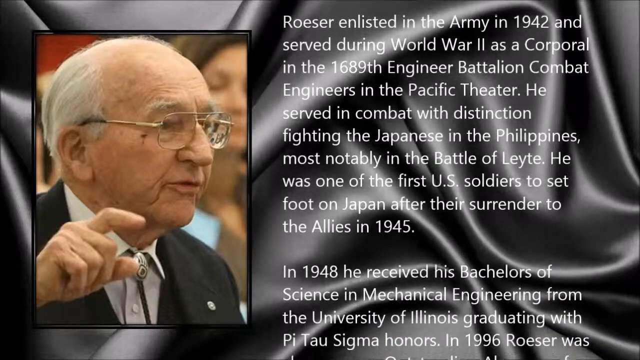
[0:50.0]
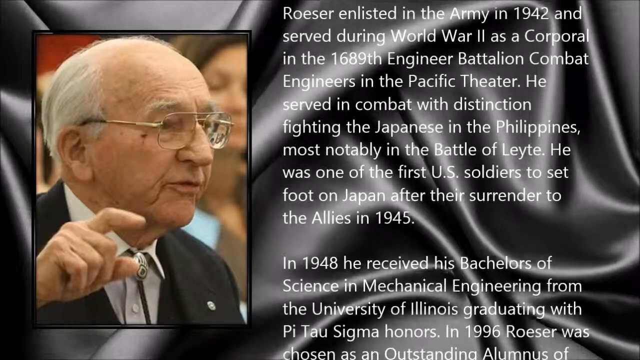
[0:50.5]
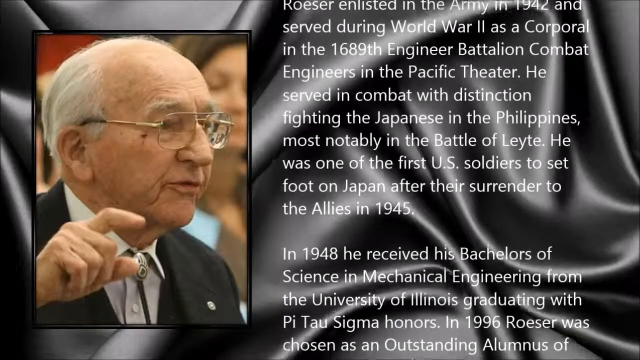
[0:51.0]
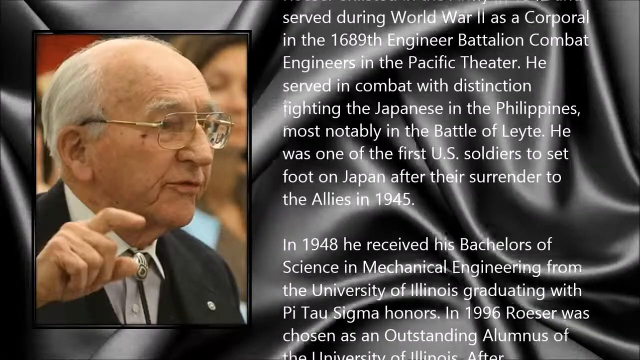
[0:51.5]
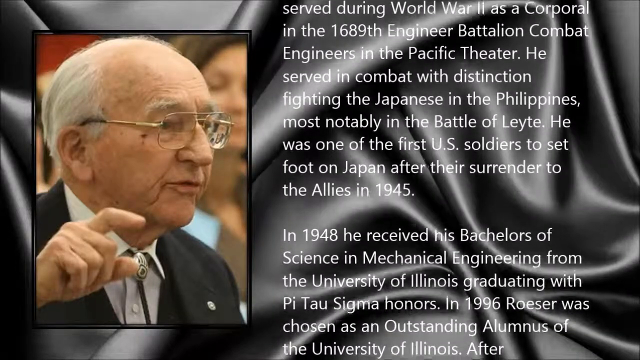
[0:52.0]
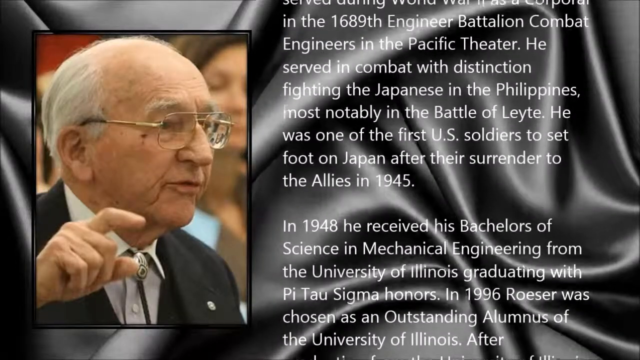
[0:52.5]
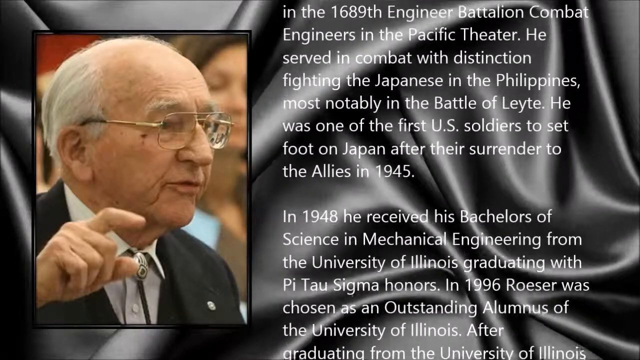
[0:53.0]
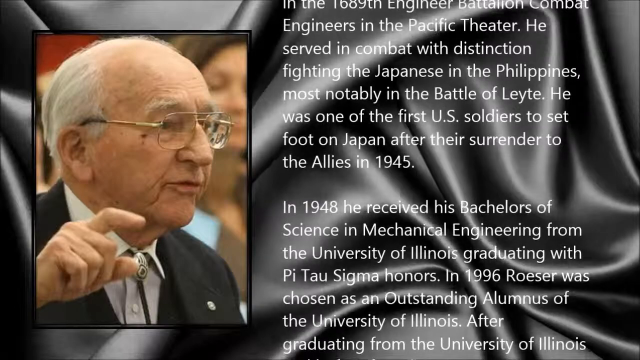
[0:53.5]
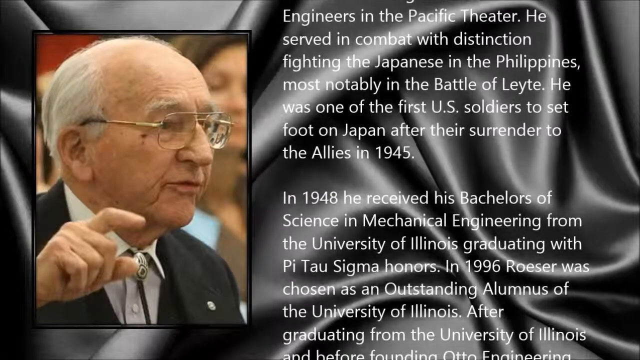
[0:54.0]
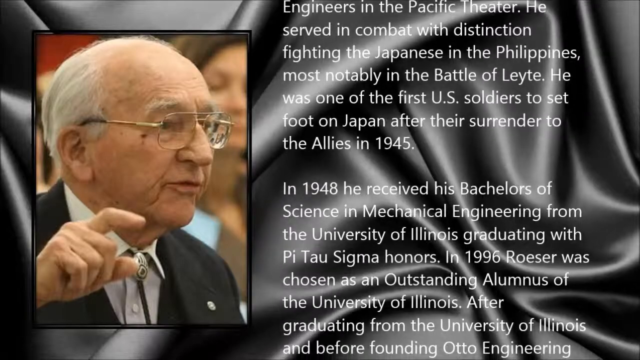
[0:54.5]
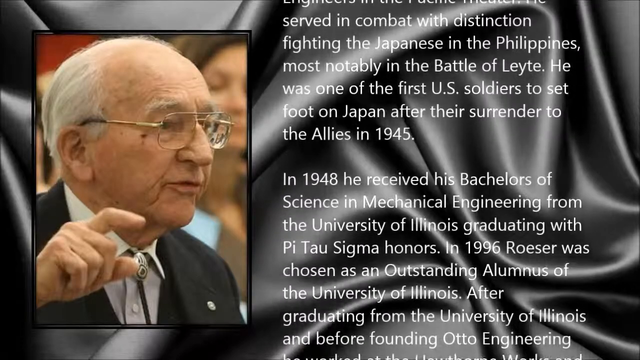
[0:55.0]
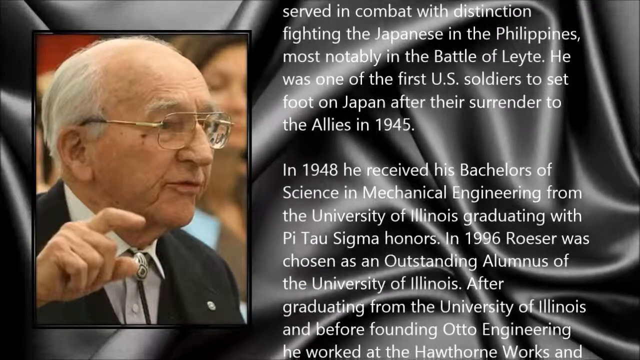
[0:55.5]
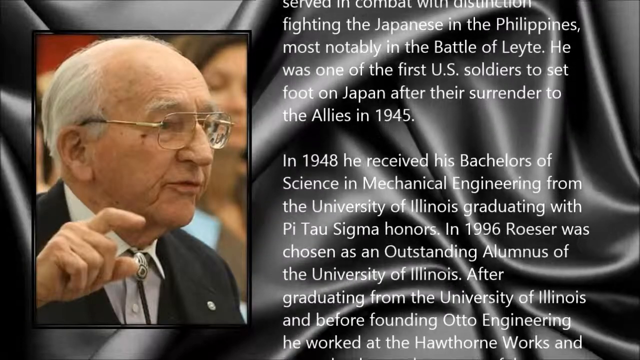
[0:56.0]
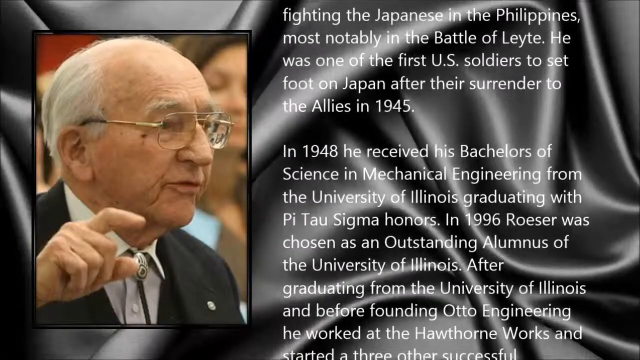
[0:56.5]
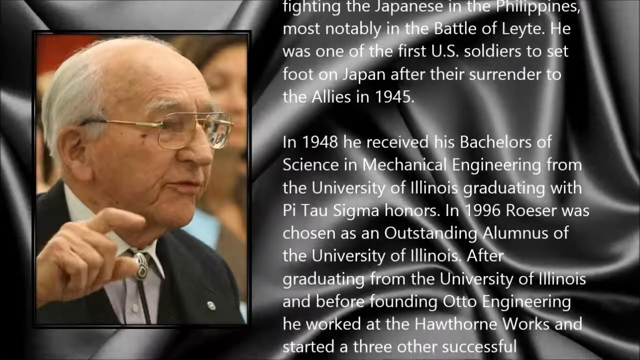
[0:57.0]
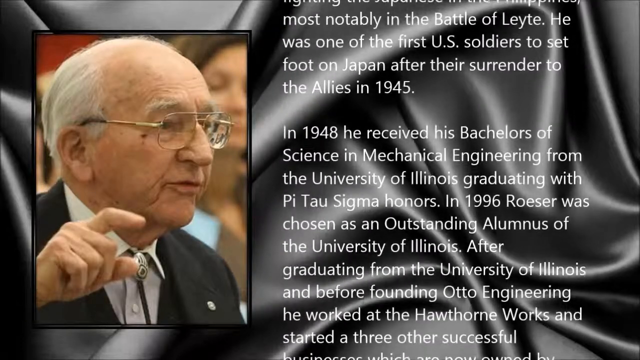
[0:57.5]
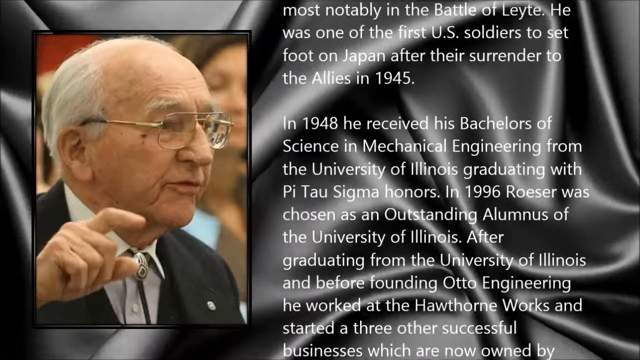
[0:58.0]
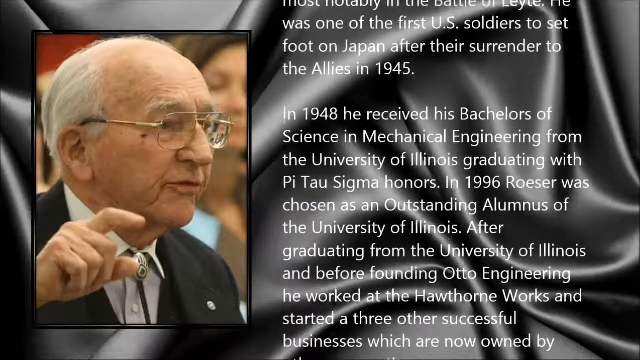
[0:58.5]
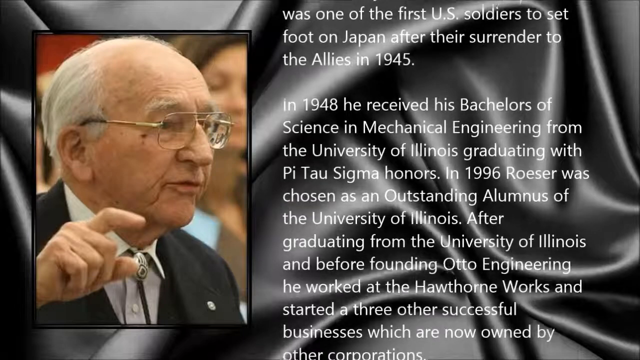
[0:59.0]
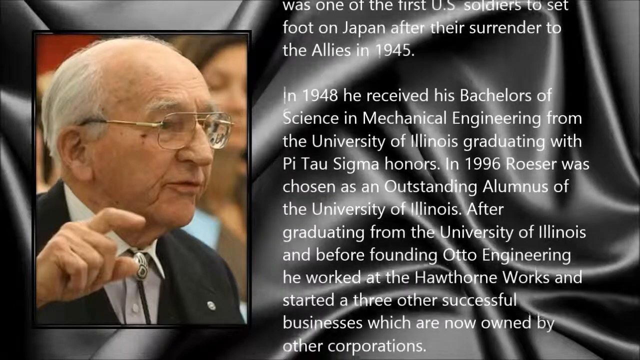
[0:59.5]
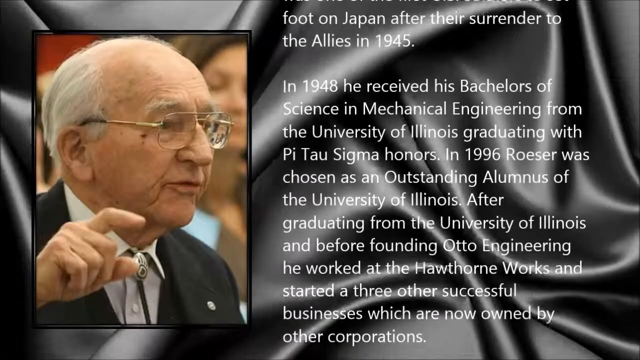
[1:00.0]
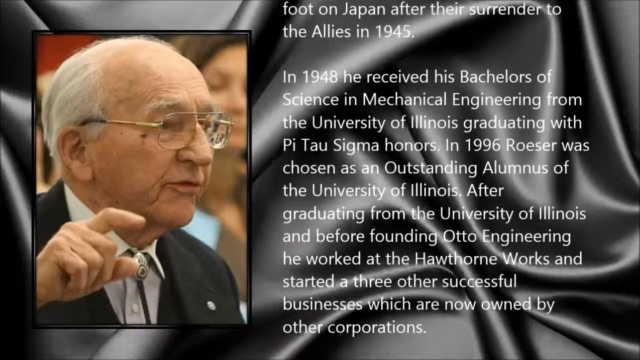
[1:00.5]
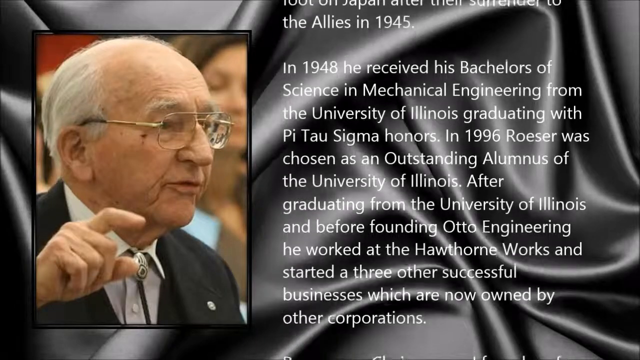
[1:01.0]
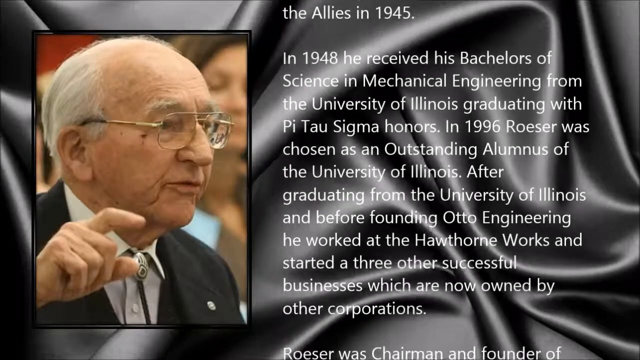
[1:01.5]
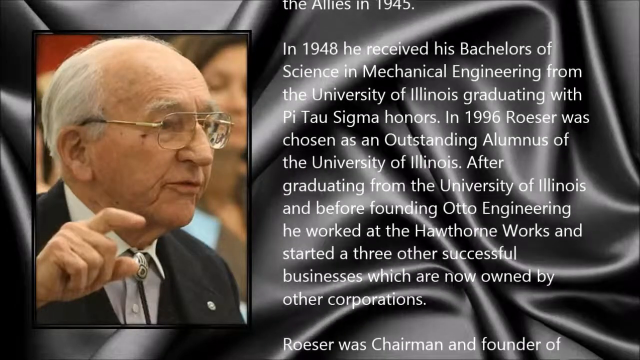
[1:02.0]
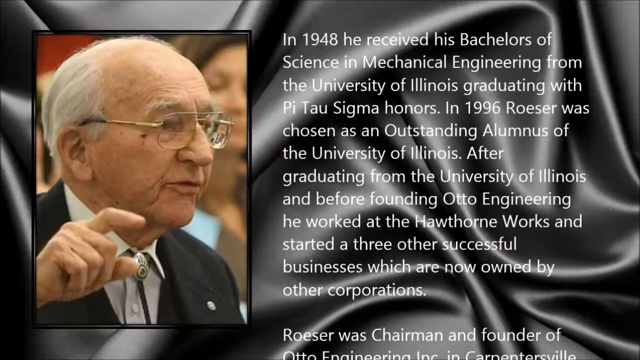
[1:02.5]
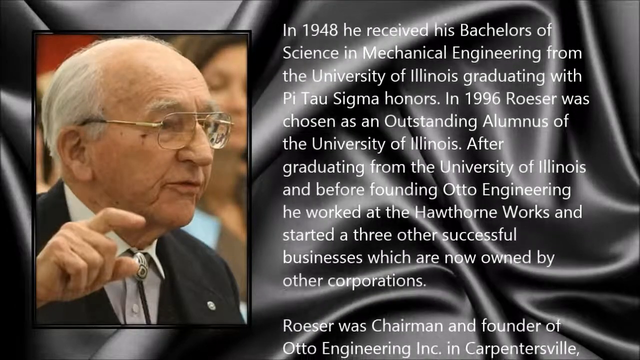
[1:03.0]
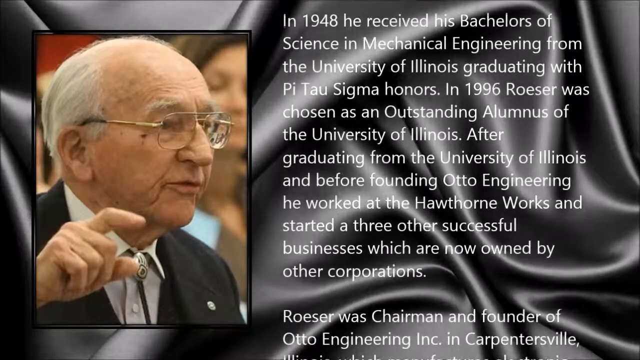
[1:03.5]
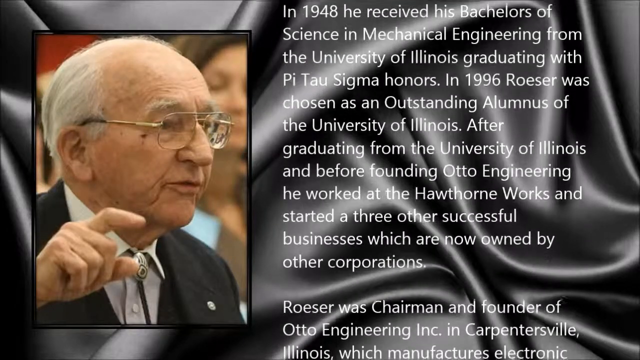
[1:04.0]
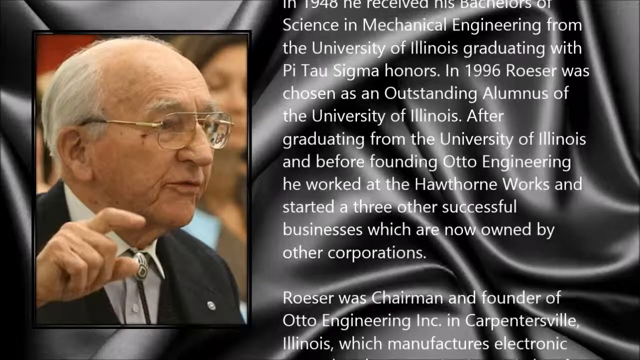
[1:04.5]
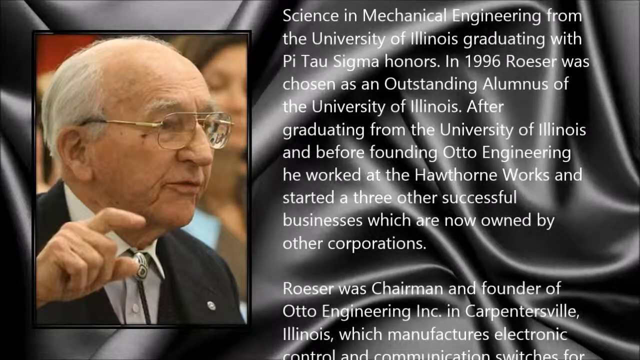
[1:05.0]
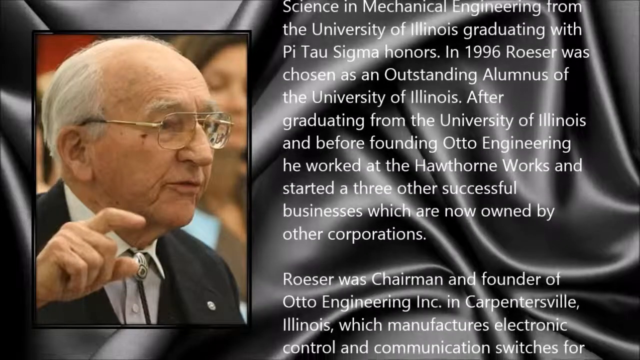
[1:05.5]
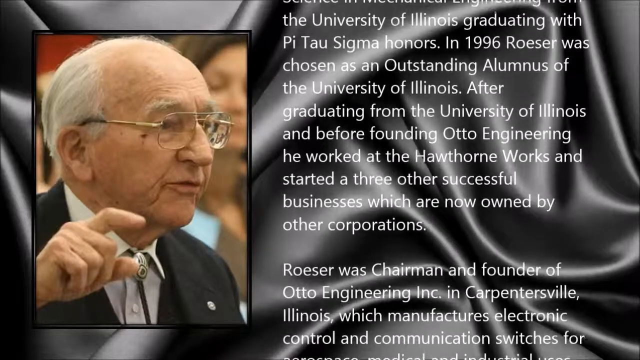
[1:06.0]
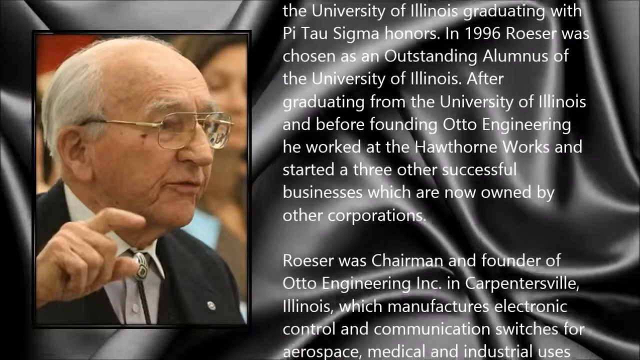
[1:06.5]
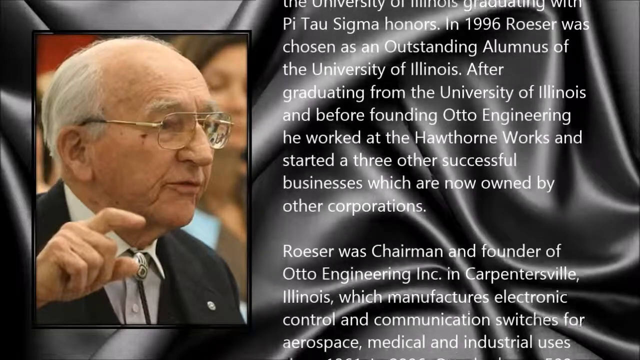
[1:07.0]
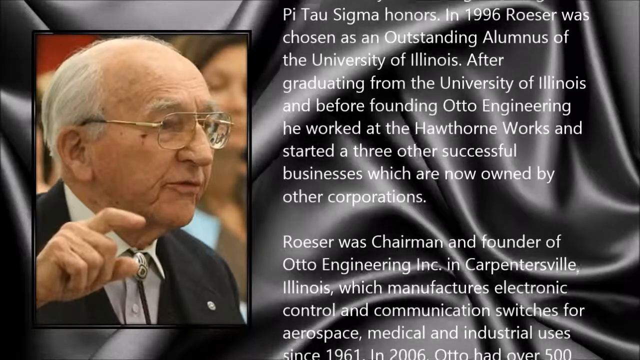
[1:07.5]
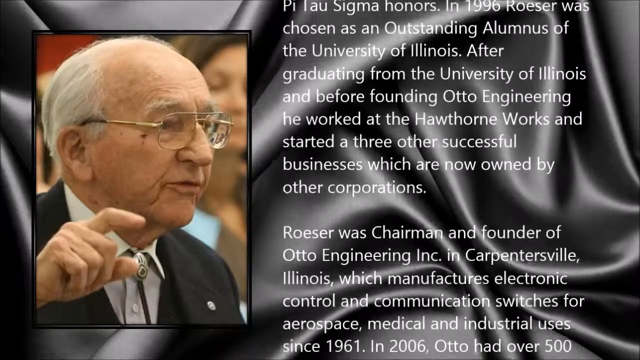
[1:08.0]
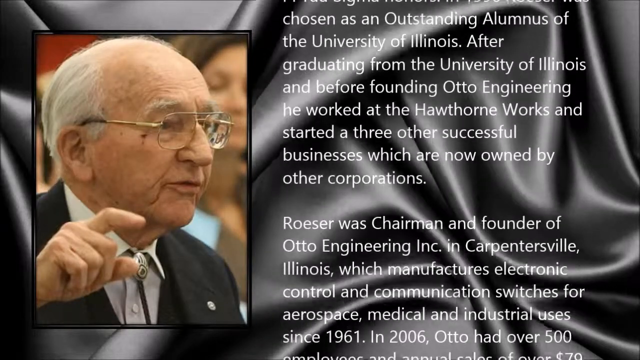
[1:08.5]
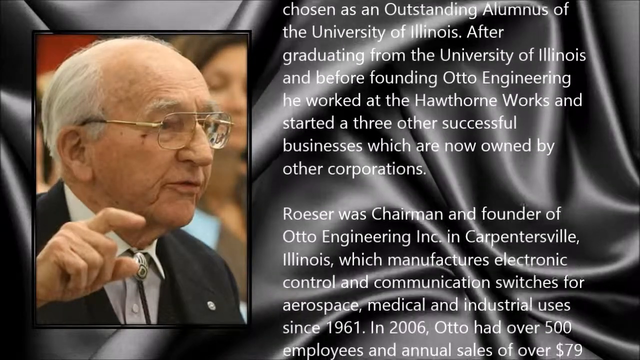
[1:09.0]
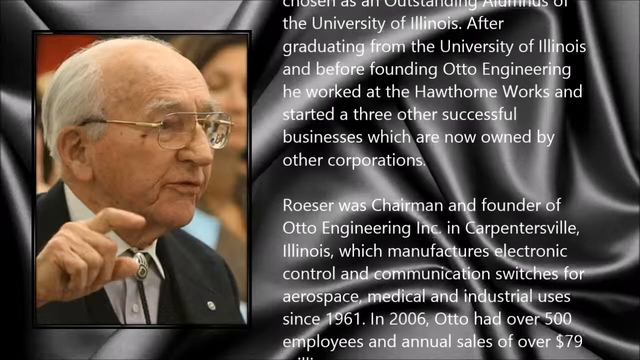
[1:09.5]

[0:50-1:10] The text continues scrolling up from the bottom on the right side of the screen, with the same picture of him as an old man on the left. It reads: "In 1996, Roeser was chosen as an outstanding alumnus of the University of Illinois. After graduating from the University of Illinois and before founding Otto Engineering, he worked at the Hawthorne Works and started three other successful businesses which are now owned by other corporations. Roeser was chairman and founder of Otto Engineering Incorporated in Carpentersville, Illinois, which manufactures electronic control and communication switches for aerospace, medical, and industrial uses since 1961." The text is white, and the background is dark gray and looks like a silk sheet, making the text easy to read. This part of the video probably is meant to be played at his memorial service.